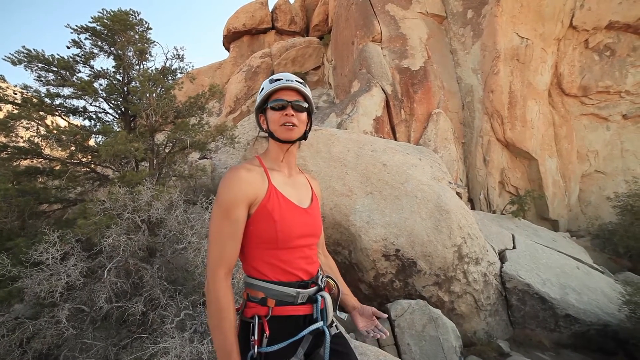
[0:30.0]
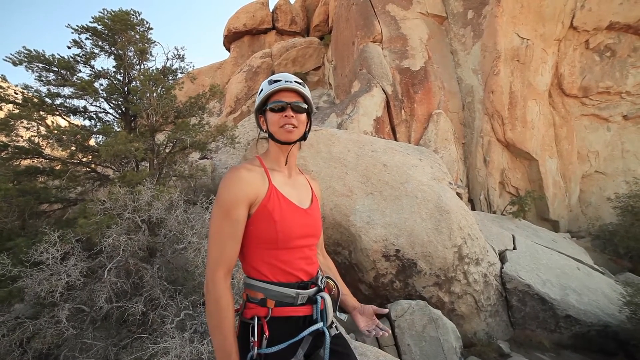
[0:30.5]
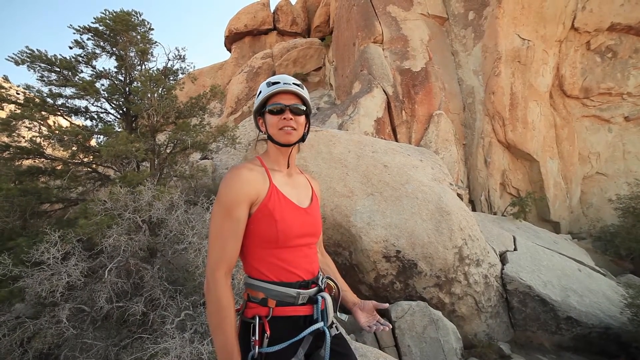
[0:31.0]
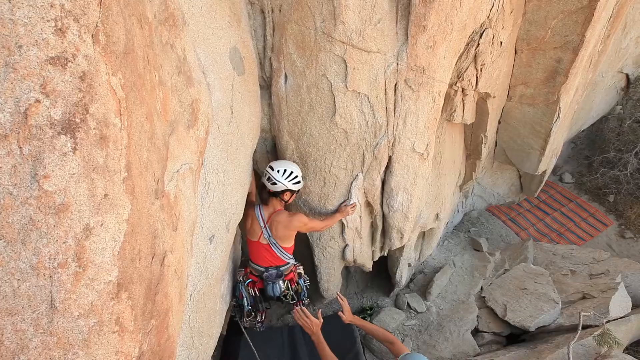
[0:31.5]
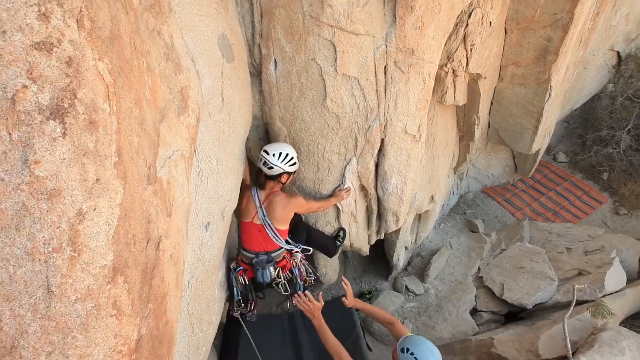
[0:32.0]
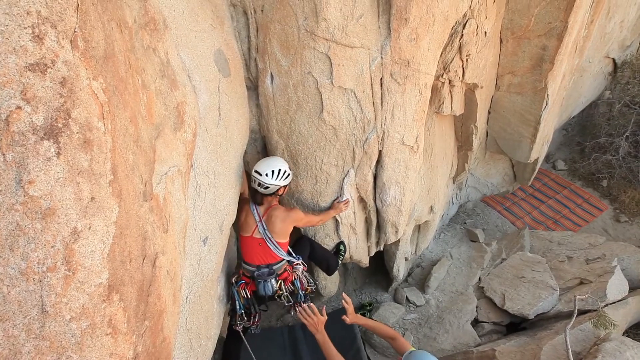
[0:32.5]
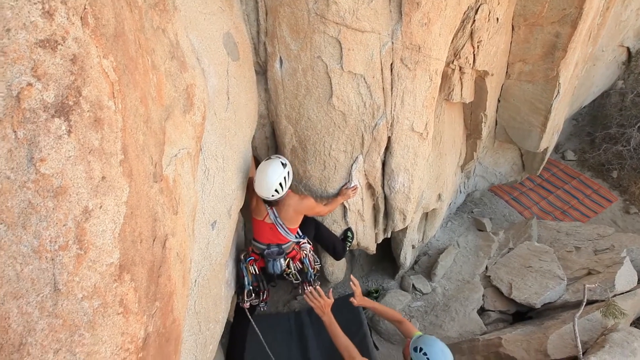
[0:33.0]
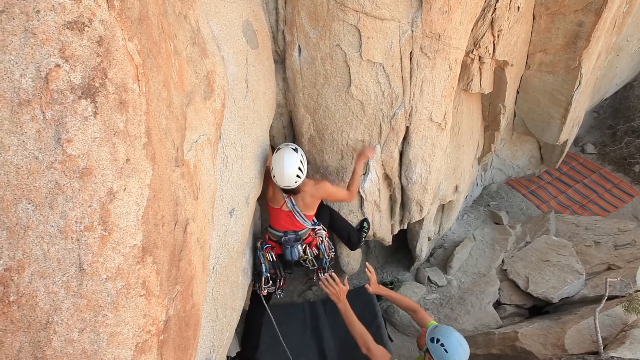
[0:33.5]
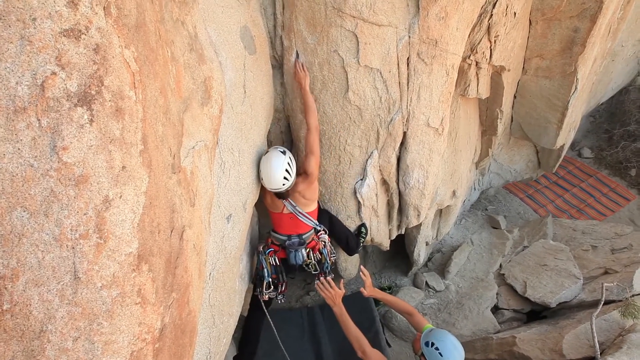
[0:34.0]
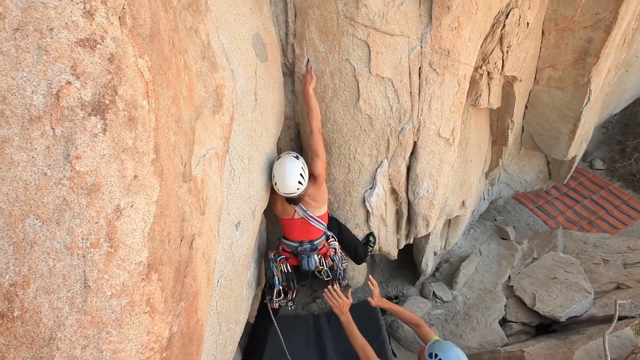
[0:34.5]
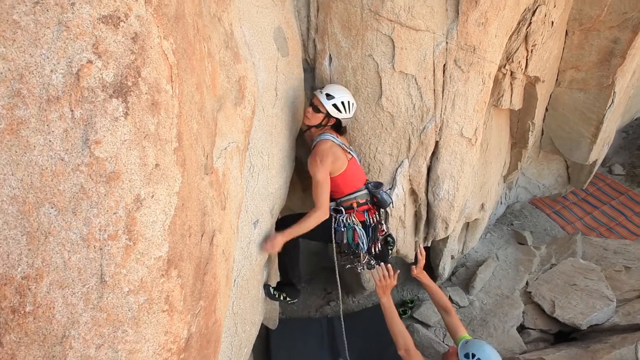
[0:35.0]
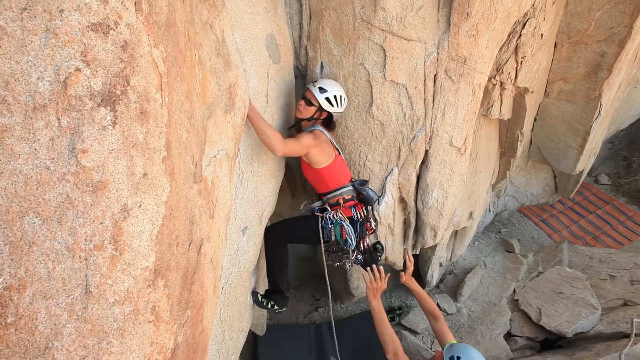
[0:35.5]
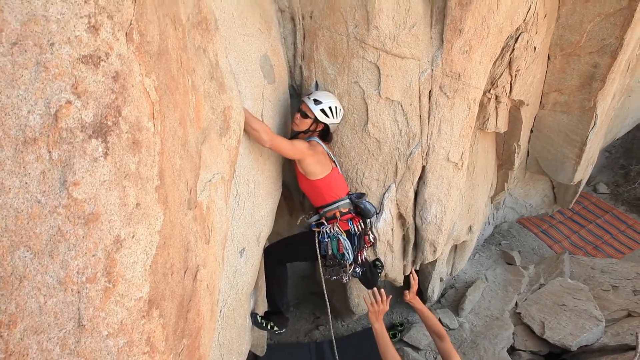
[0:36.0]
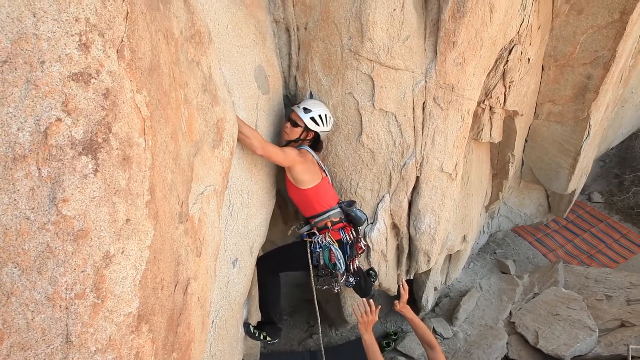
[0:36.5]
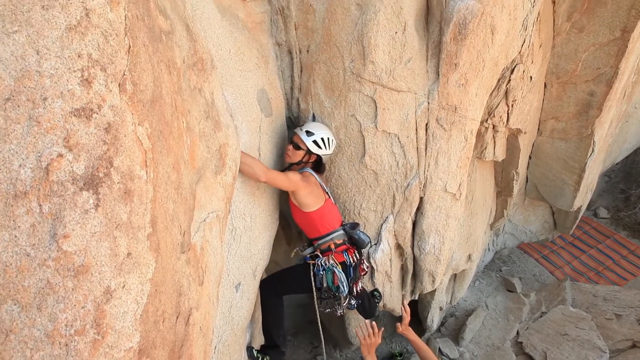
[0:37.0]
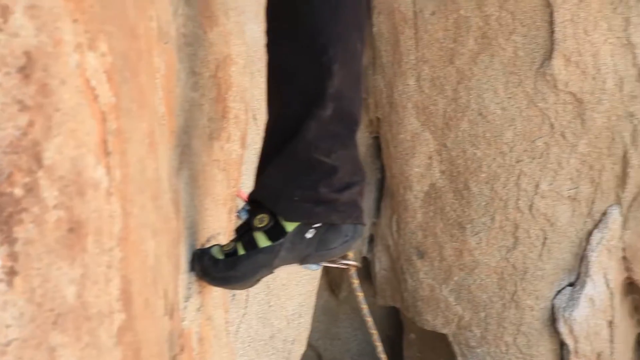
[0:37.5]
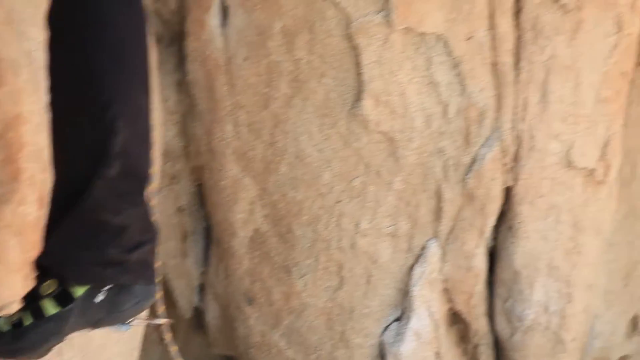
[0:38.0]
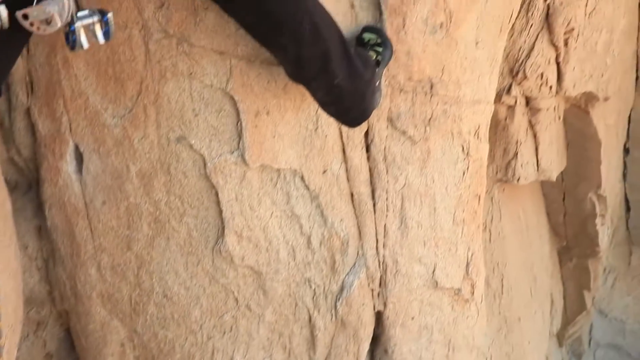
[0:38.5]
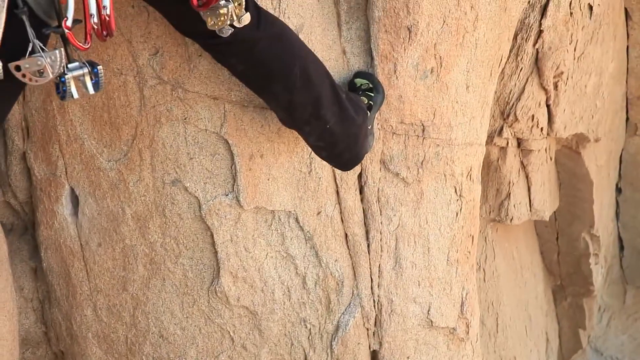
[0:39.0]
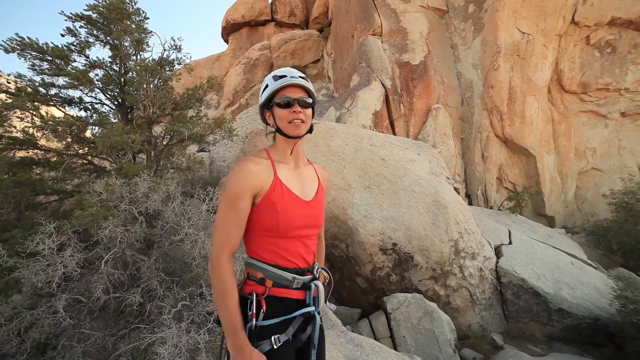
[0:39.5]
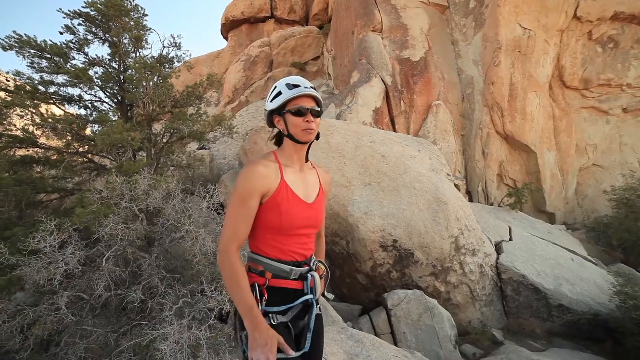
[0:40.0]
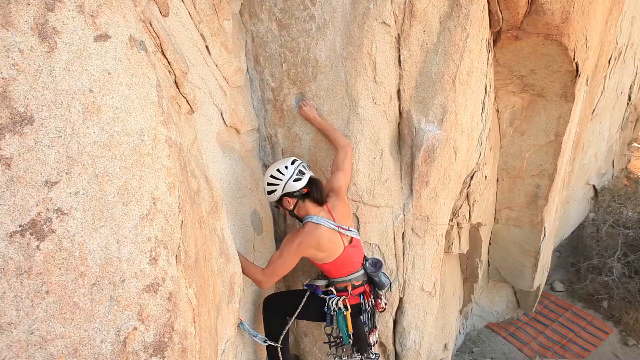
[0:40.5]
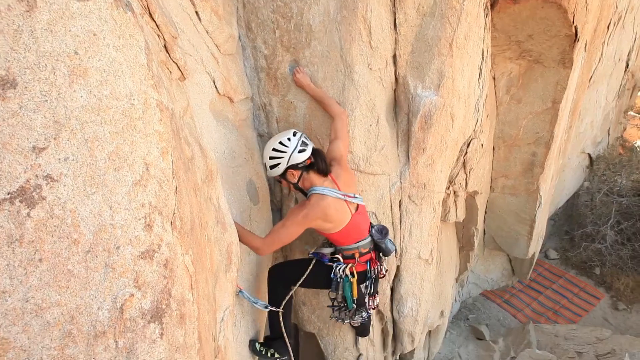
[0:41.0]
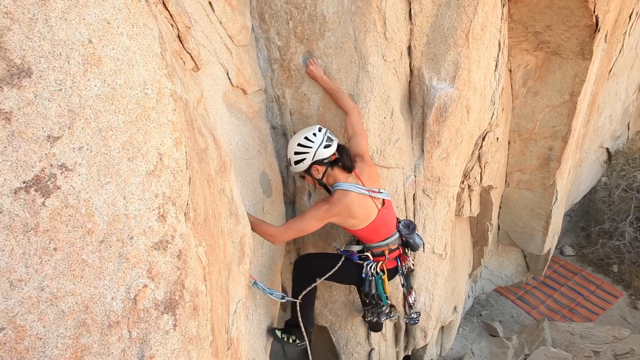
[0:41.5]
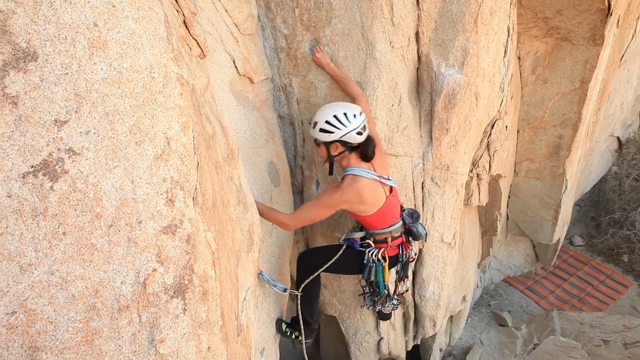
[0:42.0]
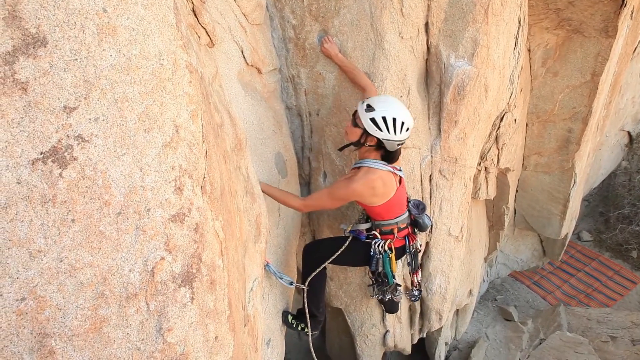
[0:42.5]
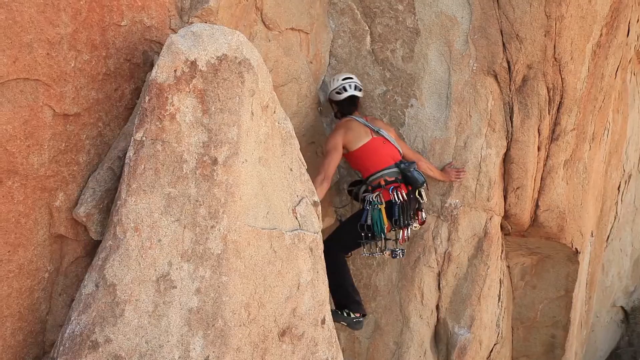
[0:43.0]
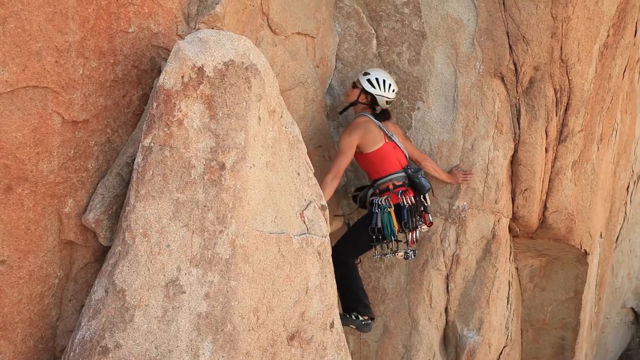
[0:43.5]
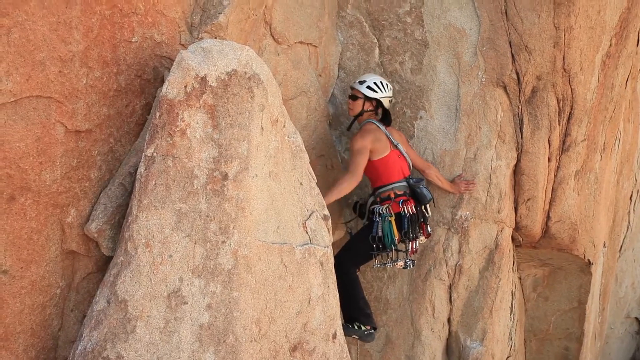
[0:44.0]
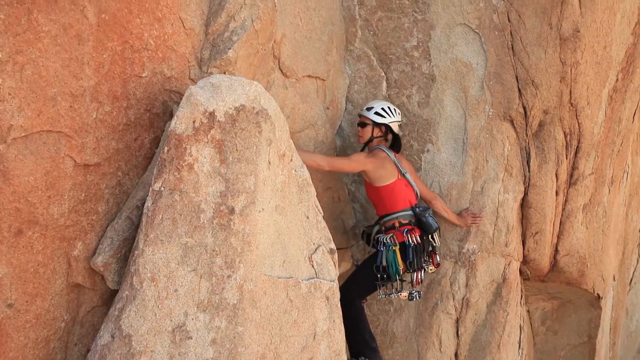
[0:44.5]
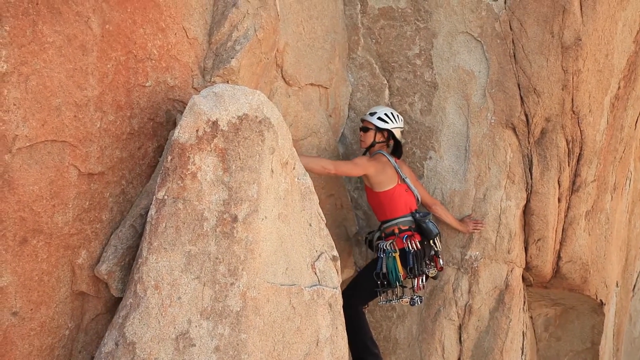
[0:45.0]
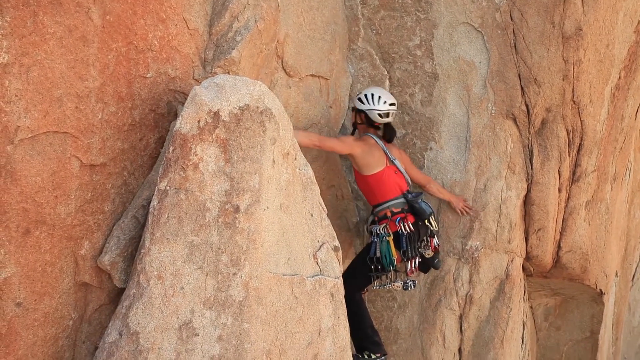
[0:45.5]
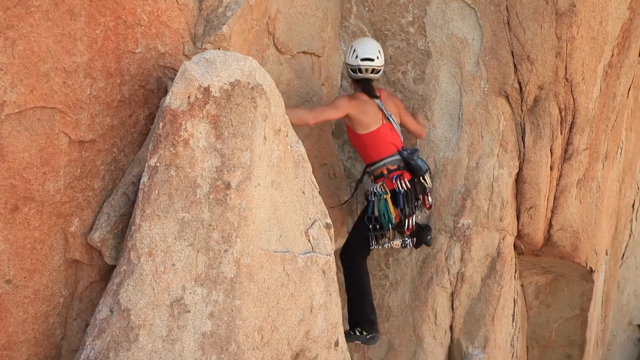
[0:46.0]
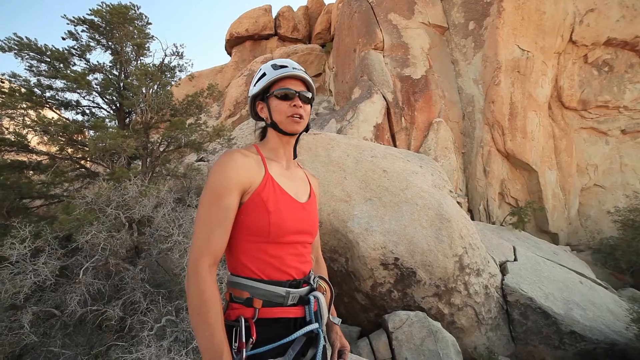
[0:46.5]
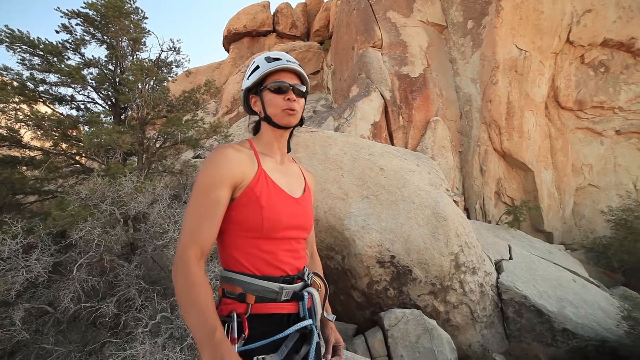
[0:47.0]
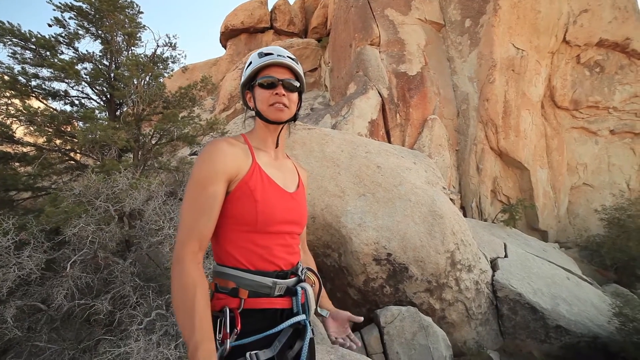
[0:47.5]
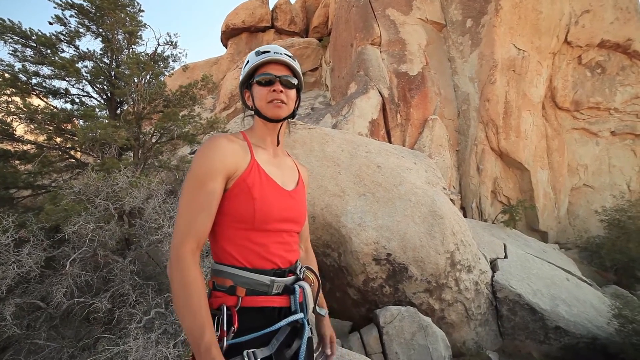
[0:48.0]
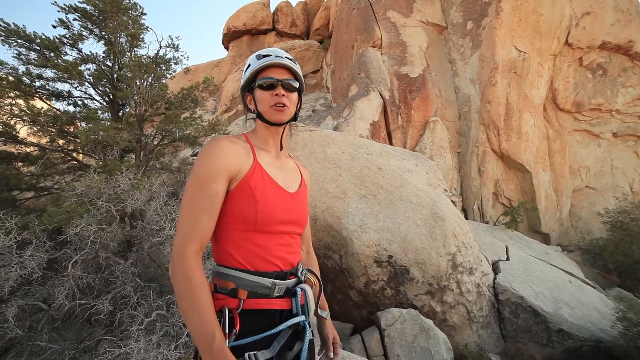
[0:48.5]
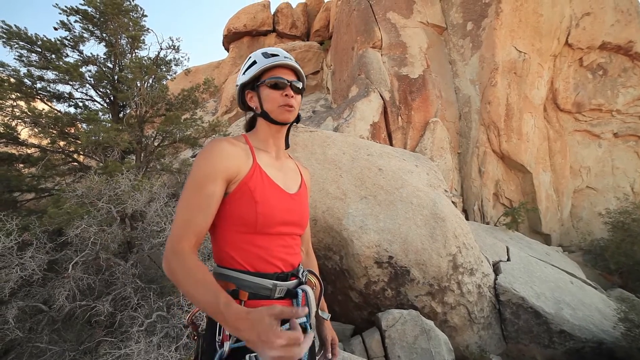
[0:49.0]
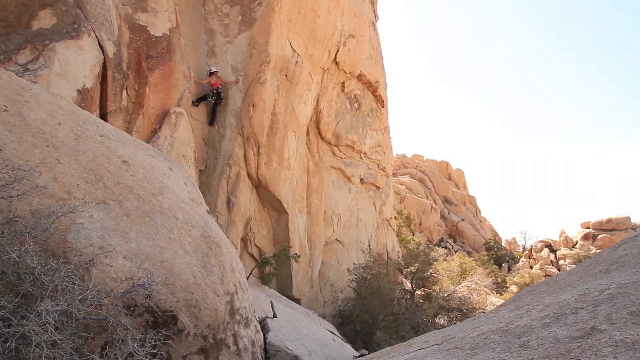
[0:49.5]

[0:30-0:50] A woman is rock climbing, wearing a pink and red shirt, a white helmet, black shades and black pants. Trees are in the background, along with a lot of rocks, mountains and hills. She talks to the camera. Then two people appear: the woman and another person helping her up as she starts climbing. She slowly gets up on the rock, taking her time and going higher and higher until she is way up. She looks fairly experienced.